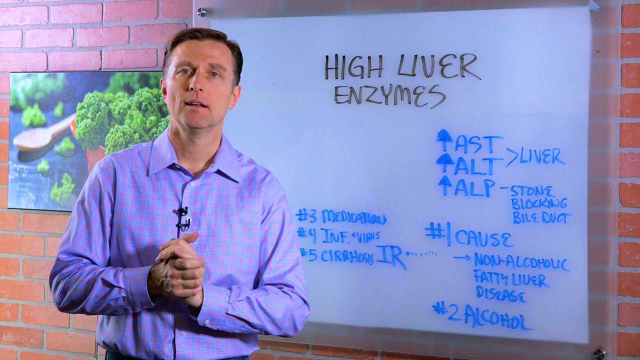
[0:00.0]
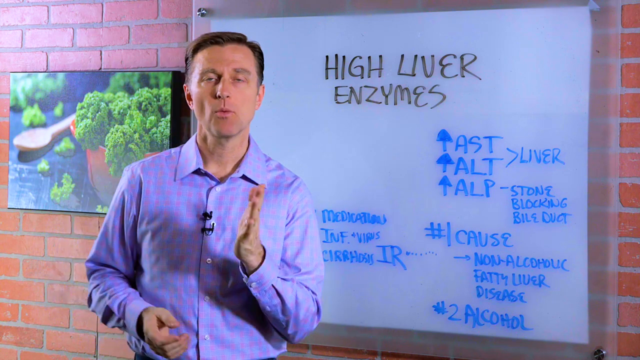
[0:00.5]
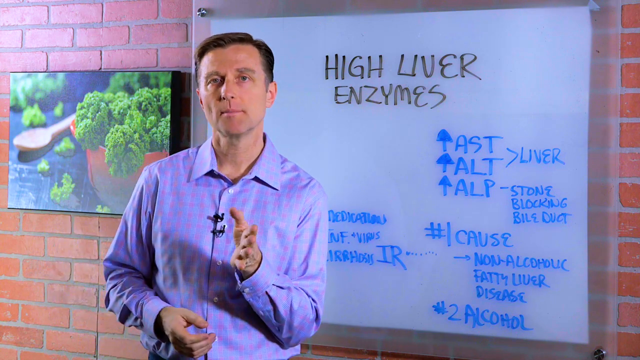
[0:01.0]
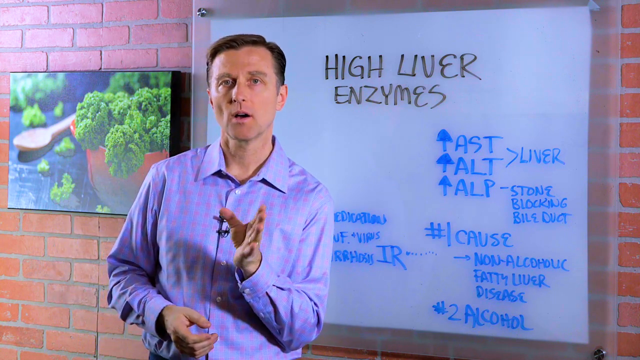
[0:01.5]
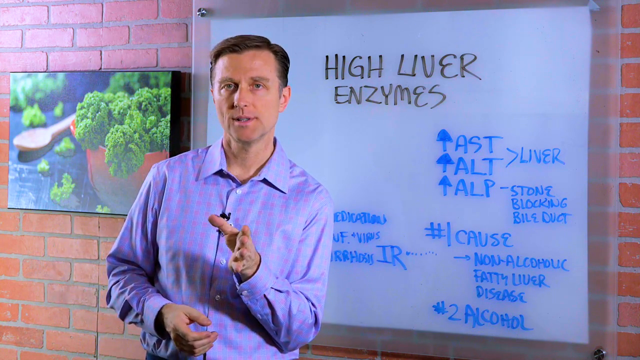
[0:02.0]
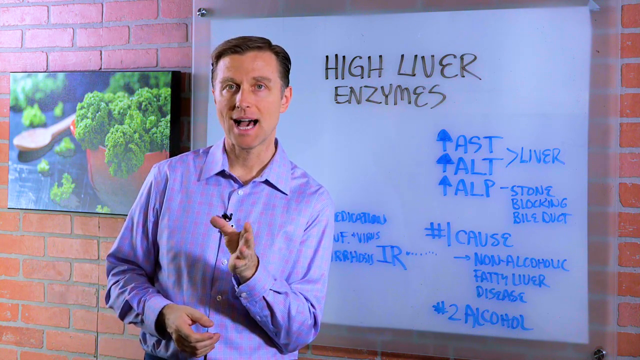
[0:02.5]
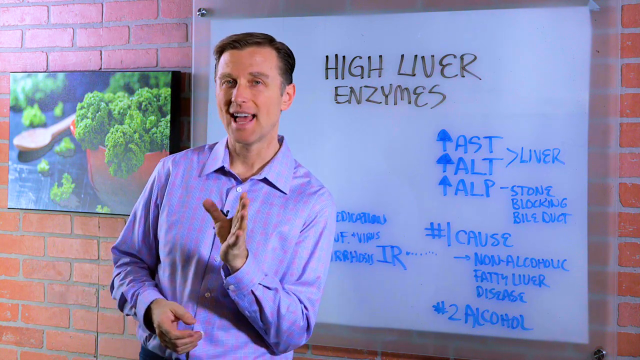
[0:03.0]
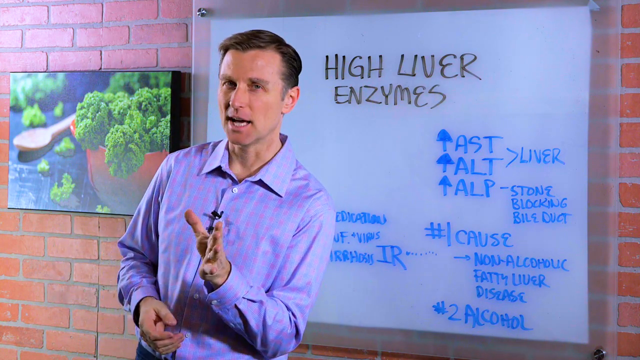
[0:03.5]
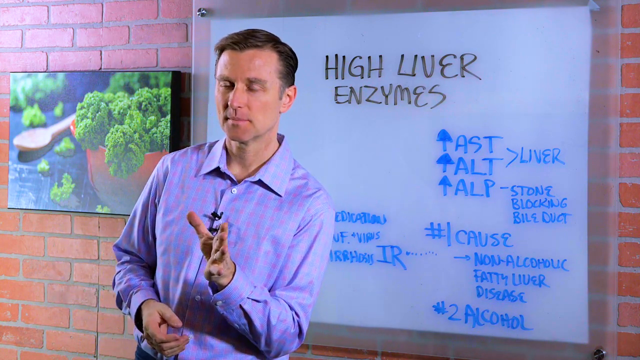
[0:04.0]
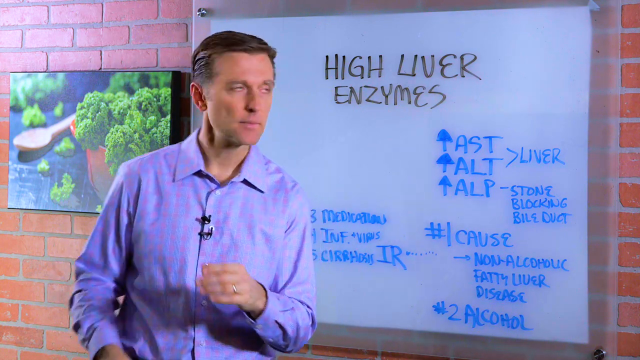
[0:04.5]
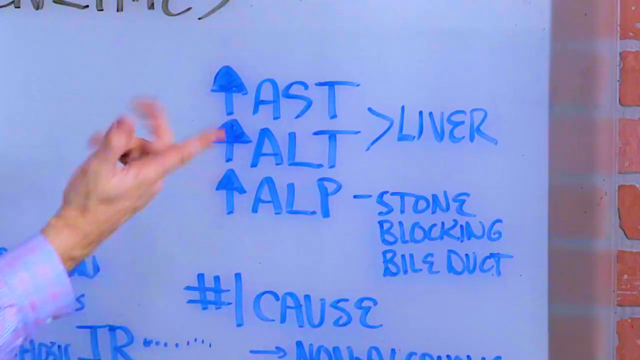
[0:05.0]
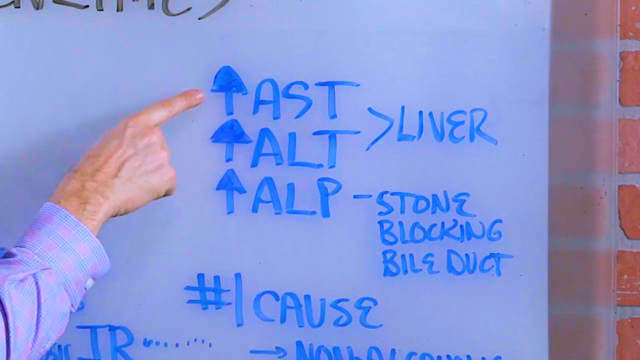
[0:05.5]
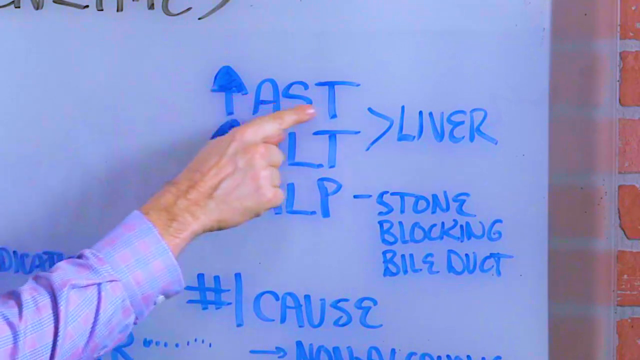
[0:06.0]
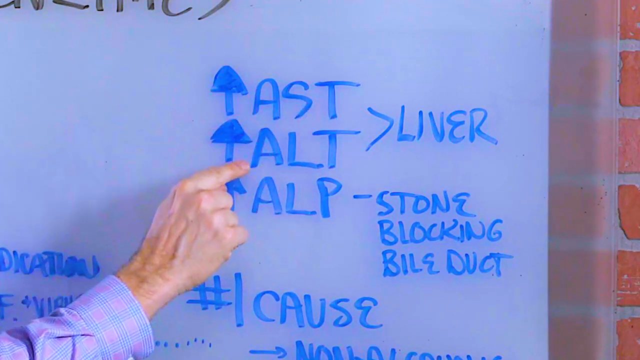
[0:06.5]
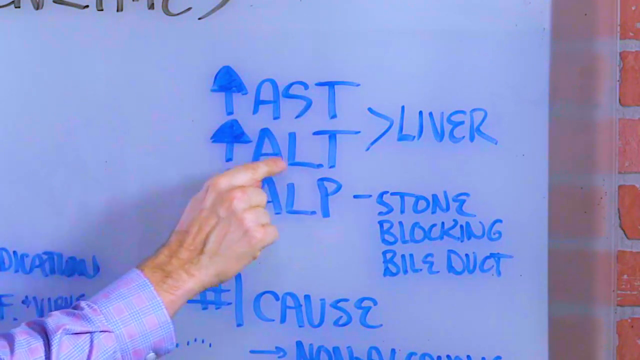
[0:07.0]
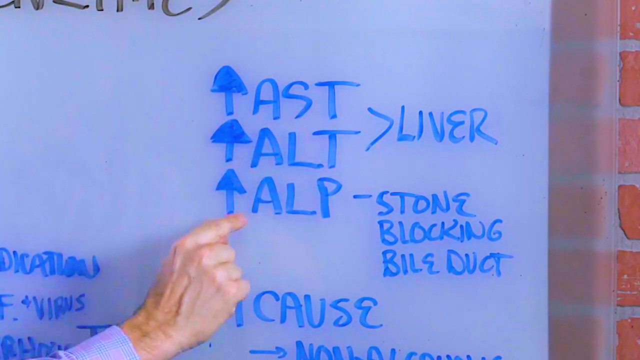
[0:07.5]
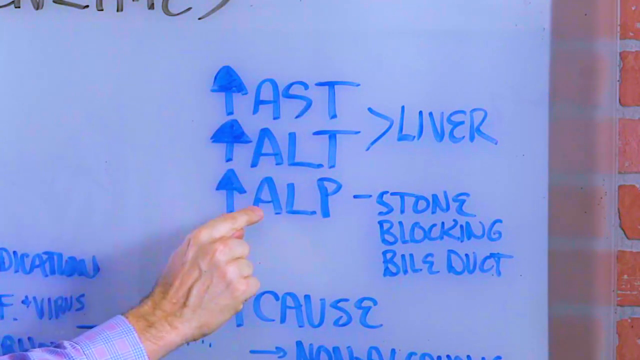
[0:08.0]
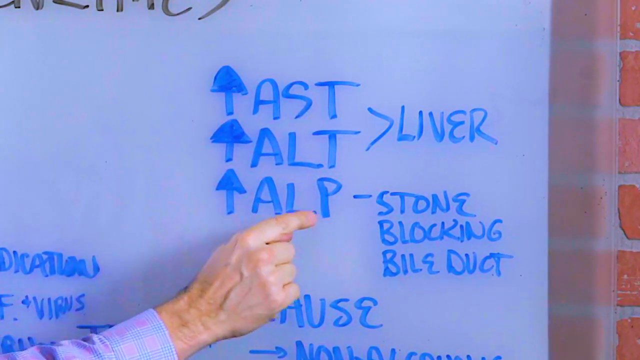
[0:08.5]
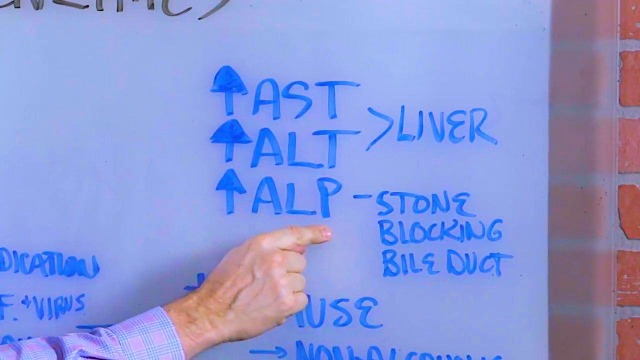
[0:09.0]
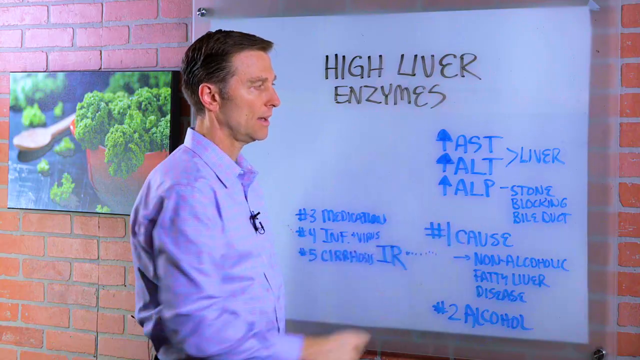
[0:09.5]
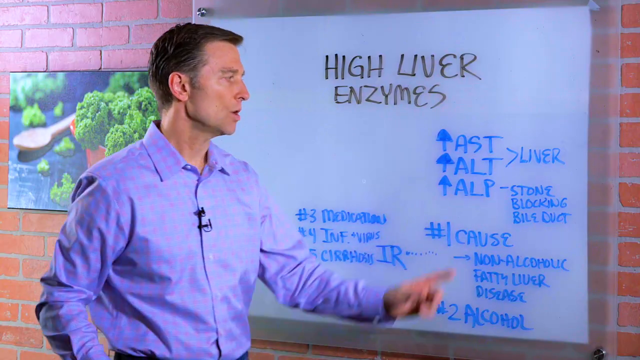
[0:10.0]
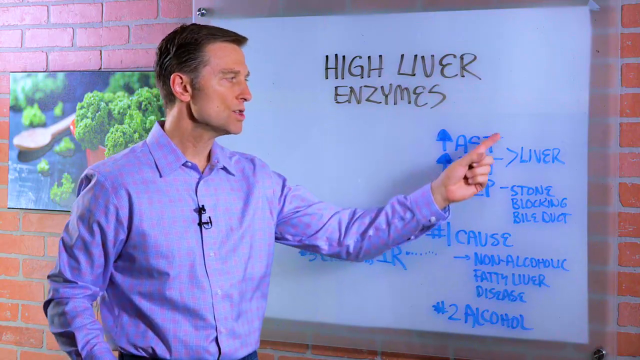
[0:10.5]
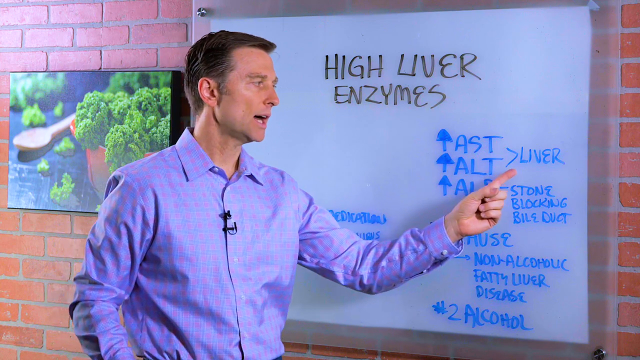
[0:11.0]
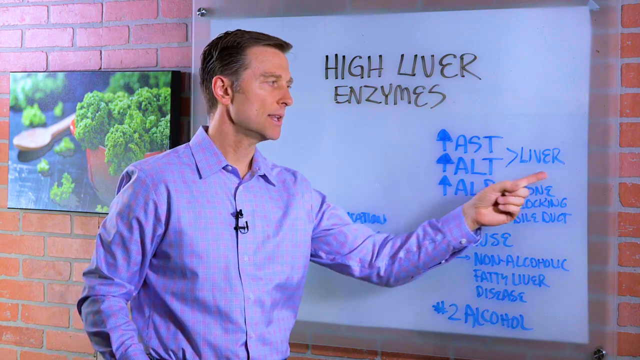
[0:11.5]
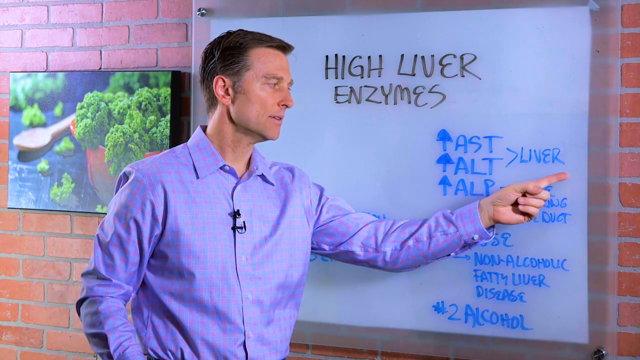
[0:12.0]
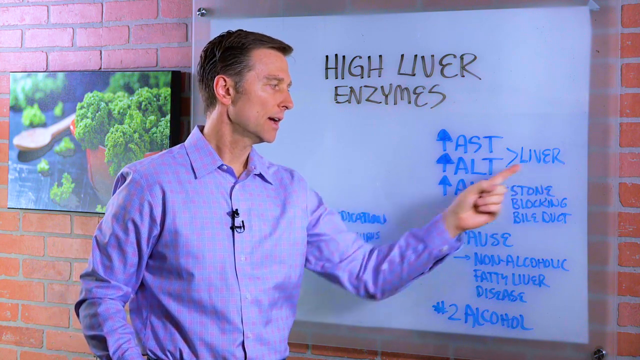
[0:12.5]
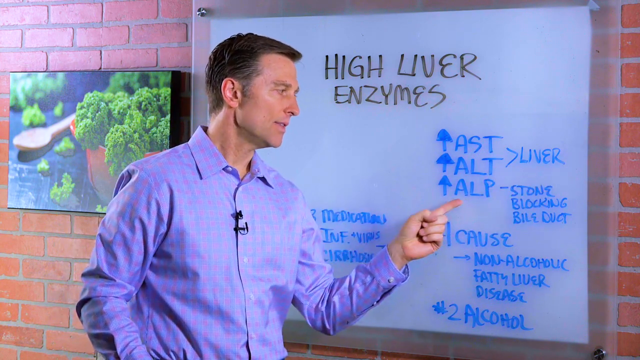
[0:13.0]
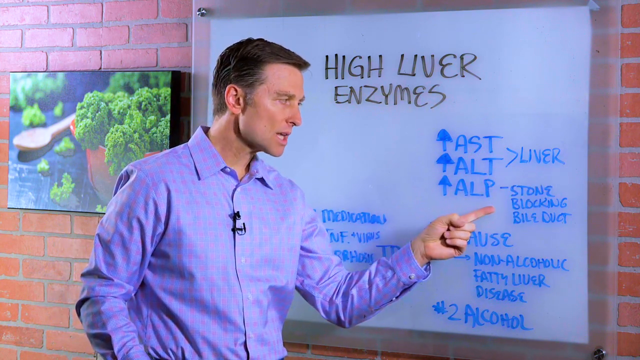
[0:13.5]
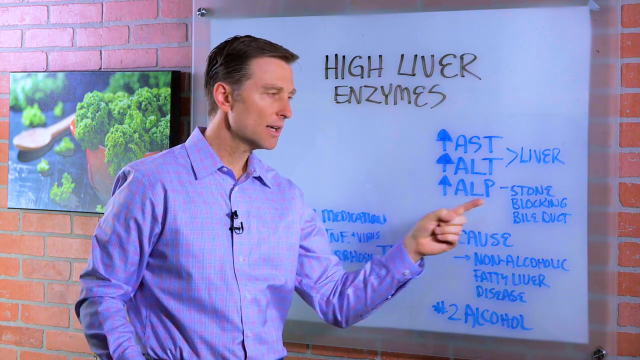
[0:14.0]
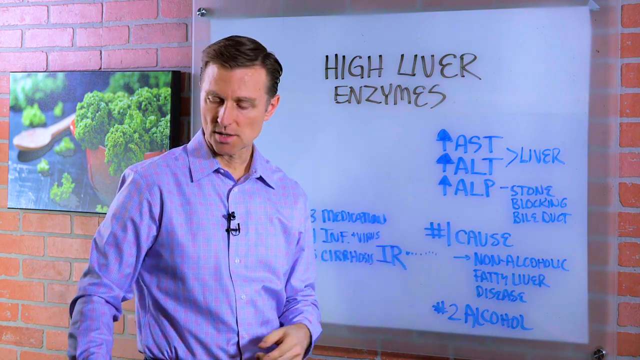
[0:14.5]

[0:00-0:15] A man talks to the camera. He wears a blue shirt with purple on it and has a microphone. He stands in front of a whiteboard mounted to a brick wall and points at the writing on it: "high liver enzymes" and "AST ALT ALP liver." Behind him is a picture of spinach in a bowl with a wooden spoon, on a black table. He points at more of the writing: "AST ALT ALP liver," "caused non-alcoholic fatty liver disease," and "number two alcohol." The writing he points at is blue, and there is also black writing on the whiteboard. He reaches toward something out of the camera's view, points with his finger at the board, turns to the side, points again, and looks back at the camera. He points at "AST ALT ALP" and slides his finger along the board.